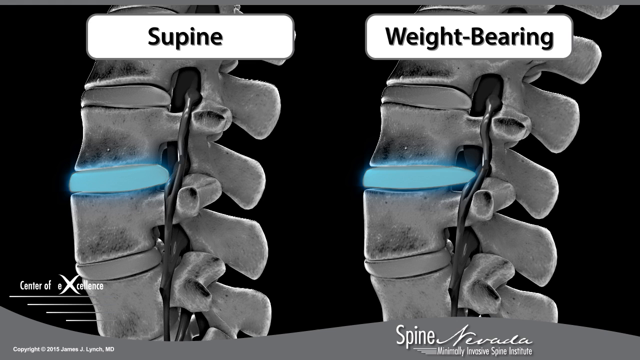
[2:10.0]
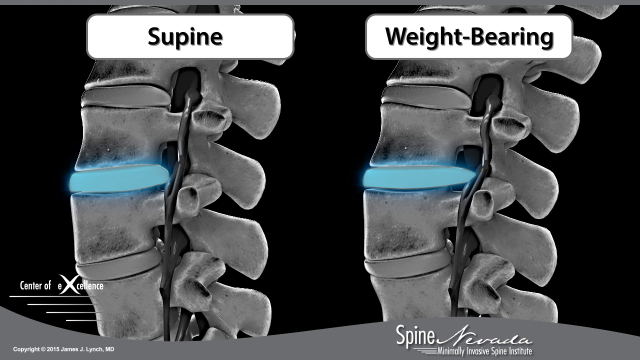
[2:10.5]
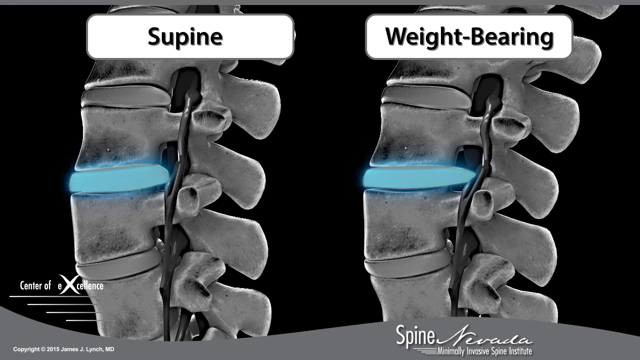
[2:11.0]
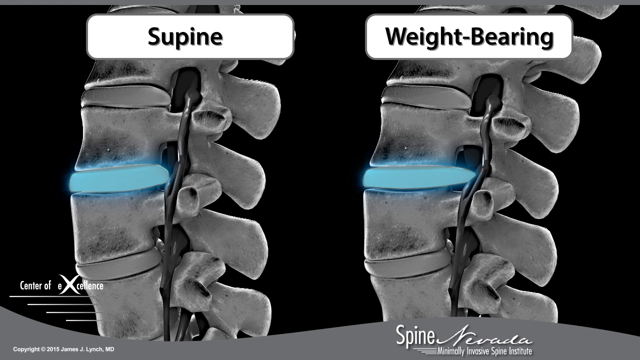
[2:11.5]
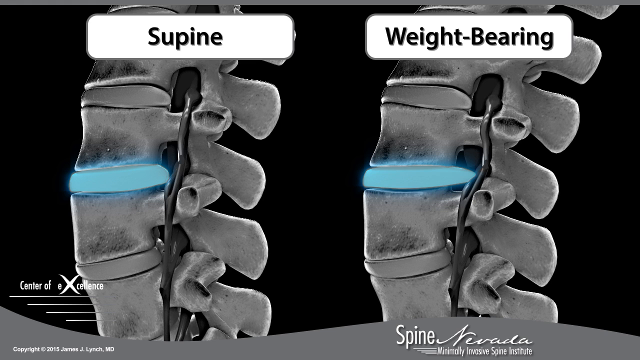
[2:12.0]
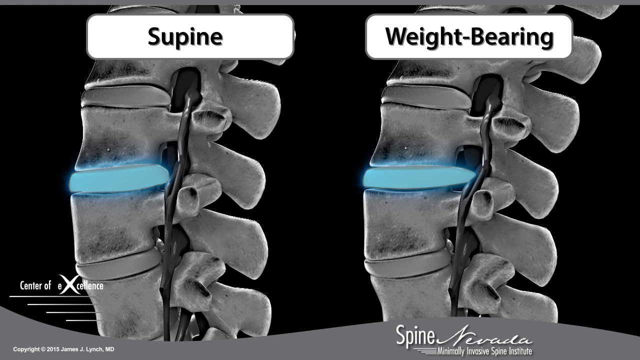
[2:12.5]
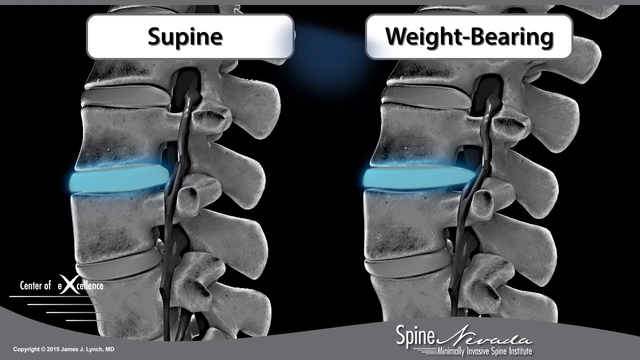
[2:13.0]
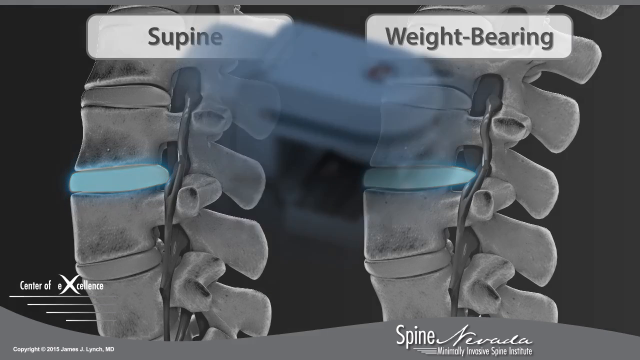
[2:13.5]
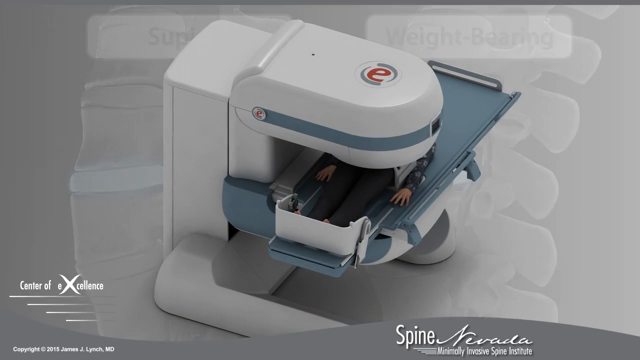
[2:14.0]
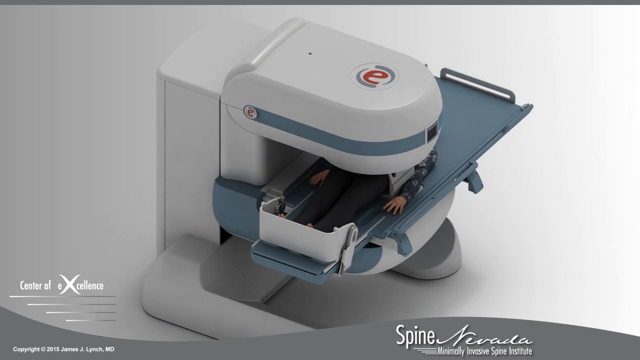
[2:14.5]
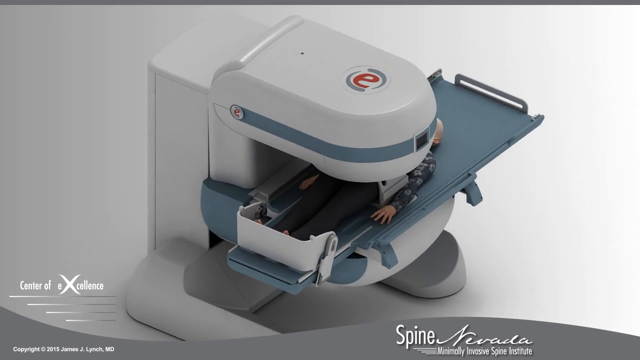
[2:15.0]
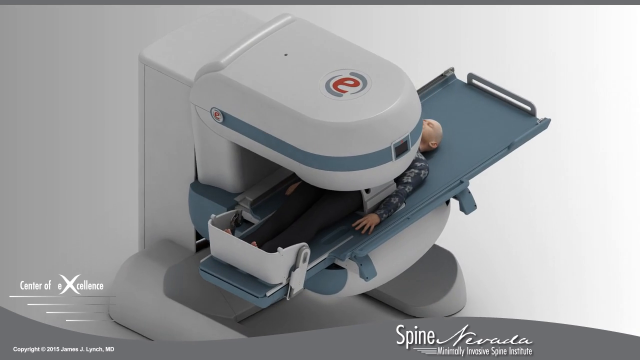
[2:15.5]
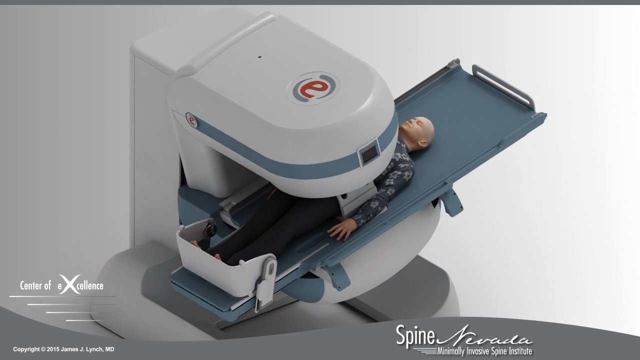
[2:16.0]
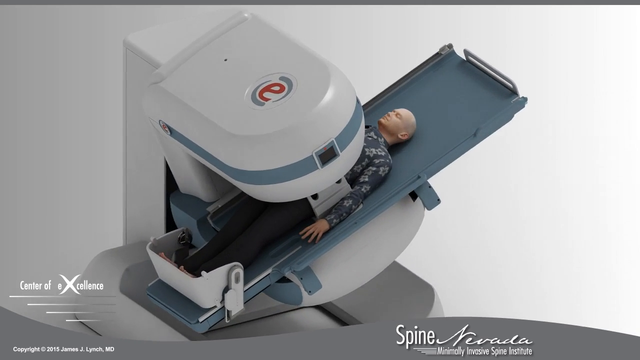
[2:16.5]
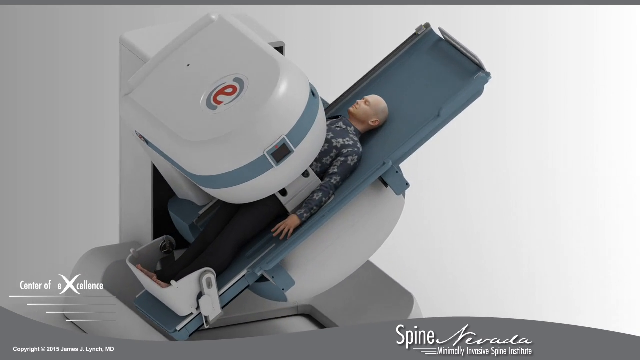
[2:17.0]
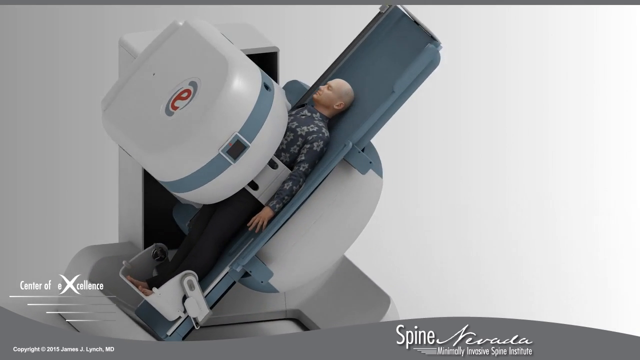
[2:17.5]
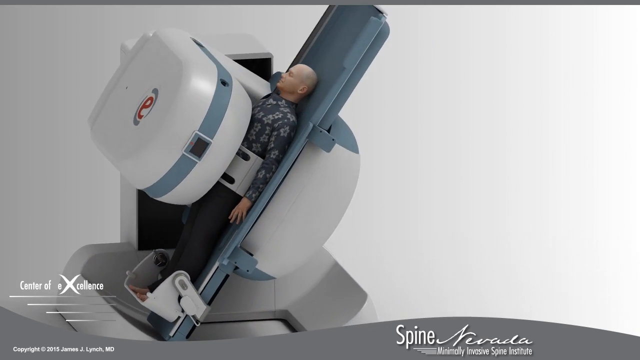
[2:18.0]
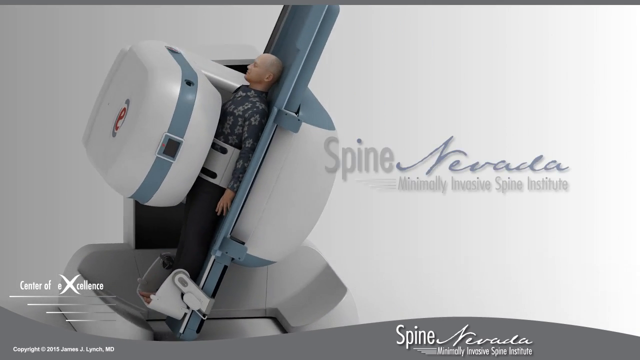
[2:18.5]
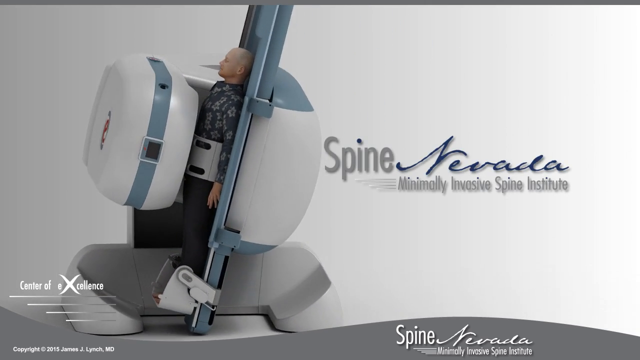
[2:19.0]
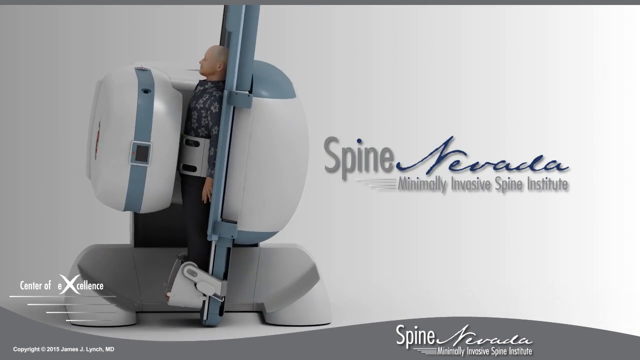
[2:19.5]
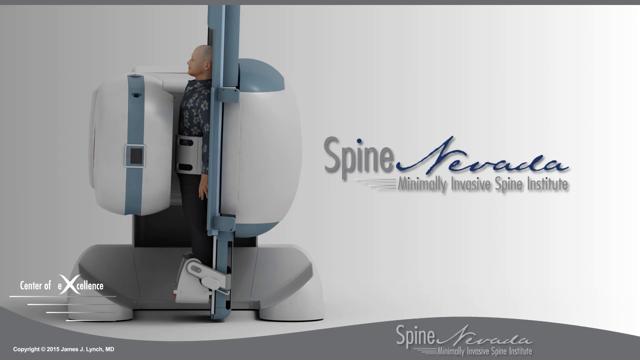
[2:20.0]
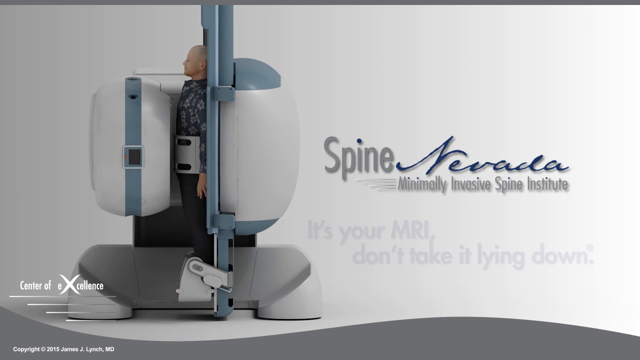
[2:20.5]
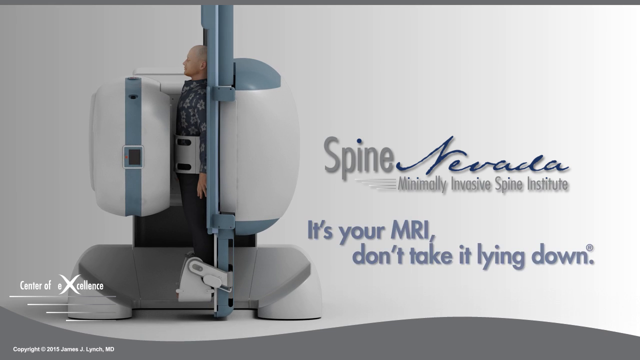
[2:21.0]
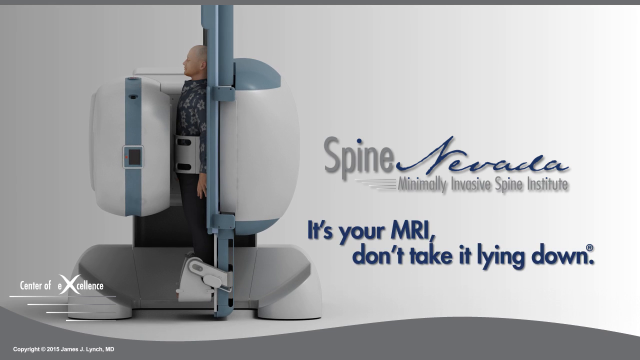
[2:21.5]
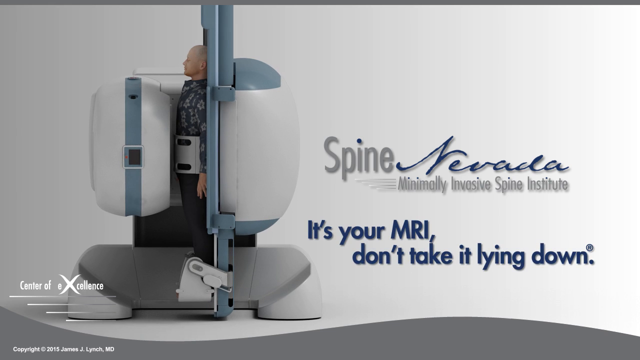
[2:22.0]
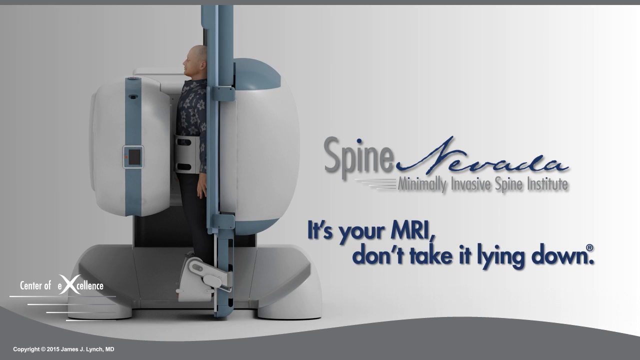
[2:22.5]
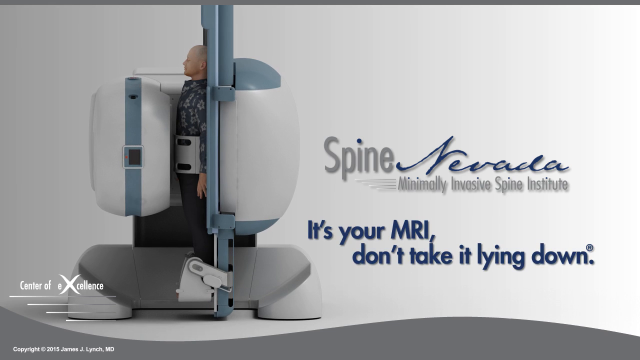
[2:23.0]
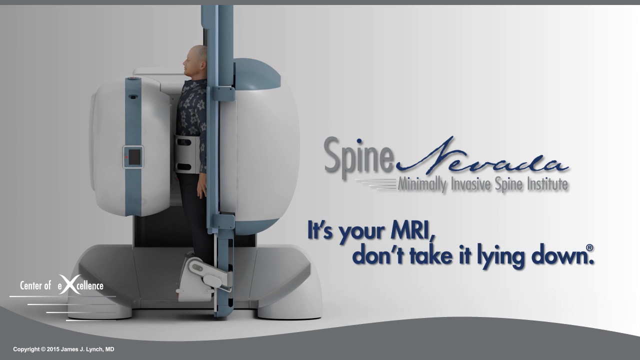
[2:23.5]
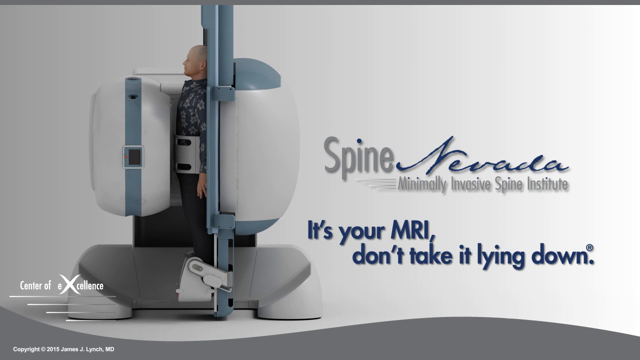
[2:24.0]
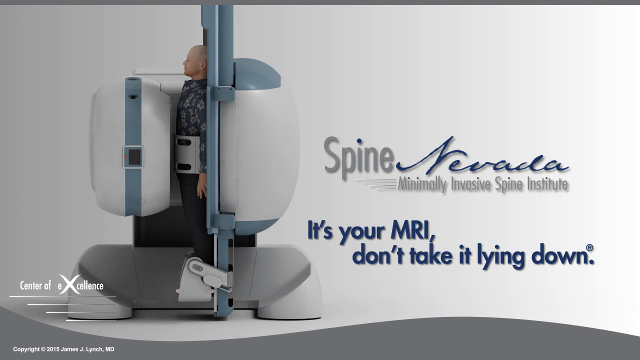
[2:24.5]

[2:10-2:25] The x-ray images fade away and the view returns to the person lying horizontal on the machine, with the camera slowly moving to the right; the person is then vertical on the machine. On the right side the logo "Spine Nevada Minimally Invasive Spine Institute" appears, followed below it by navy blue text reading "it's your MRI don't take it lying down". At the bottom of the screen the gray, kind of wavy curve reading "Spine Institute Nevada" is still present, with the logo on the left.